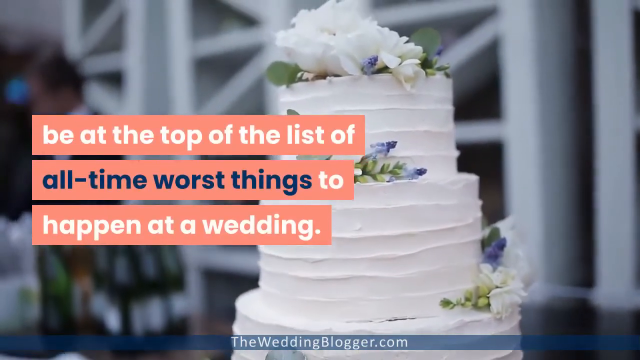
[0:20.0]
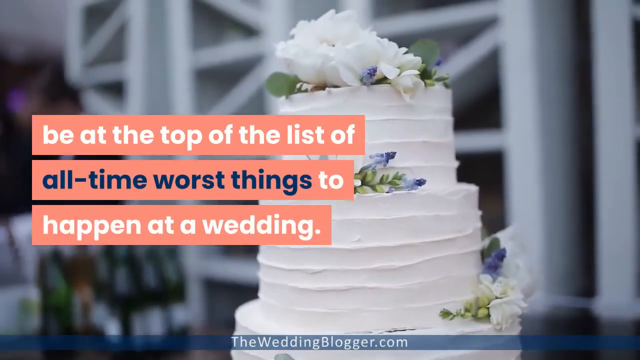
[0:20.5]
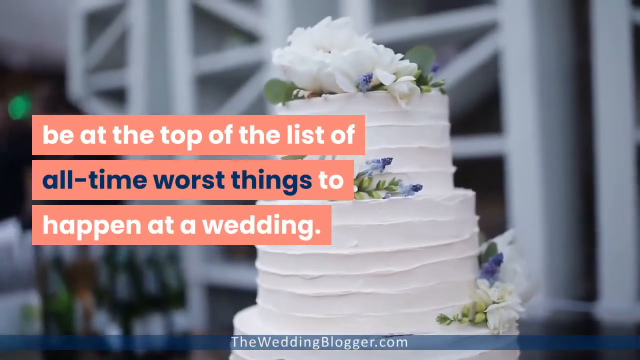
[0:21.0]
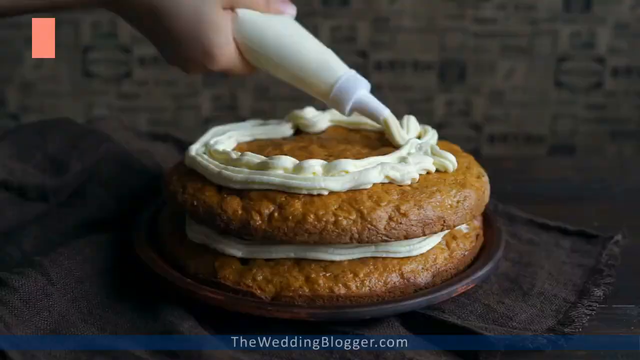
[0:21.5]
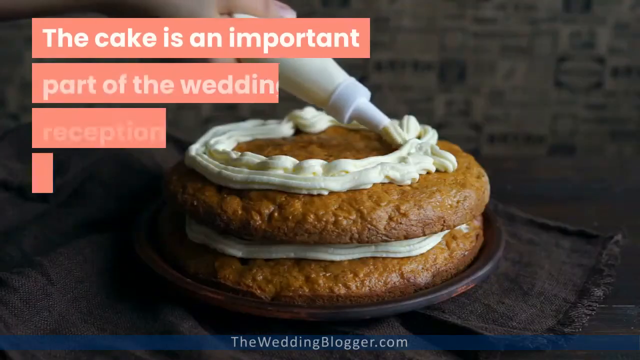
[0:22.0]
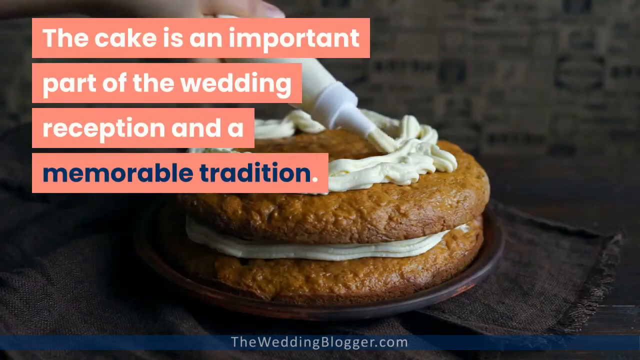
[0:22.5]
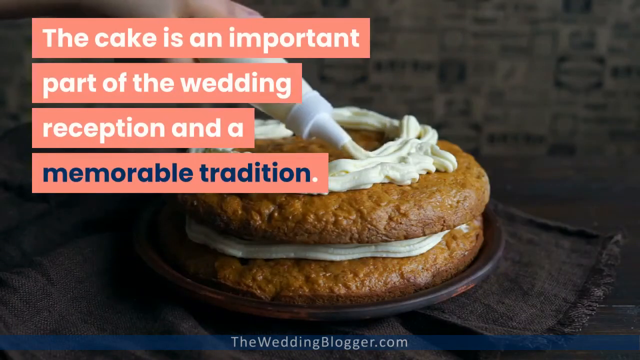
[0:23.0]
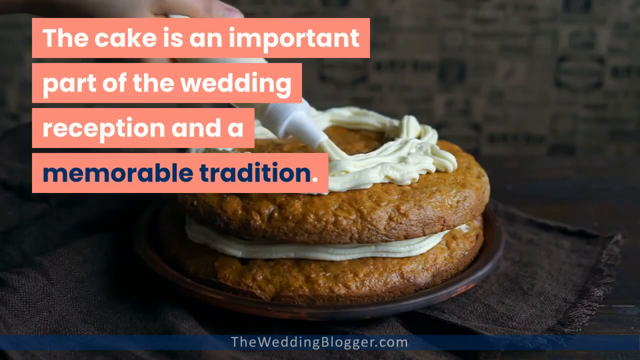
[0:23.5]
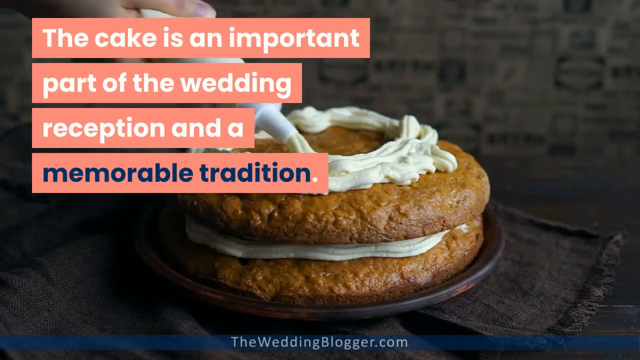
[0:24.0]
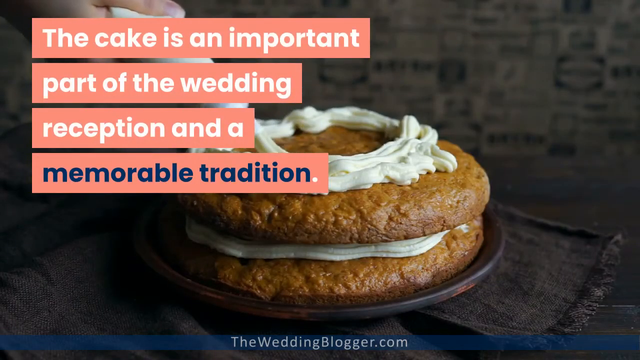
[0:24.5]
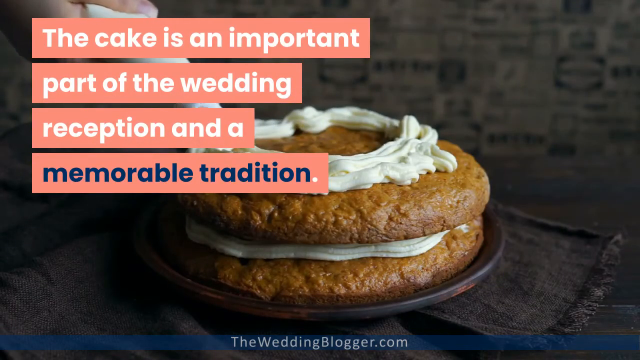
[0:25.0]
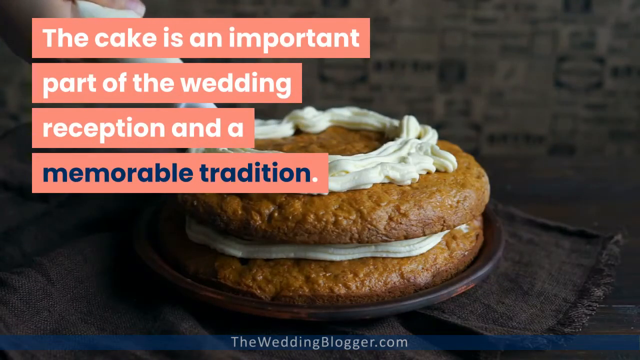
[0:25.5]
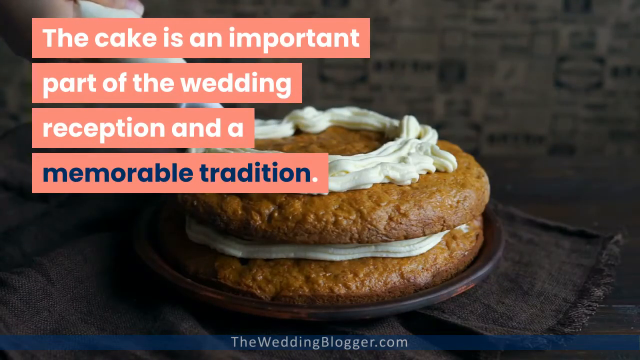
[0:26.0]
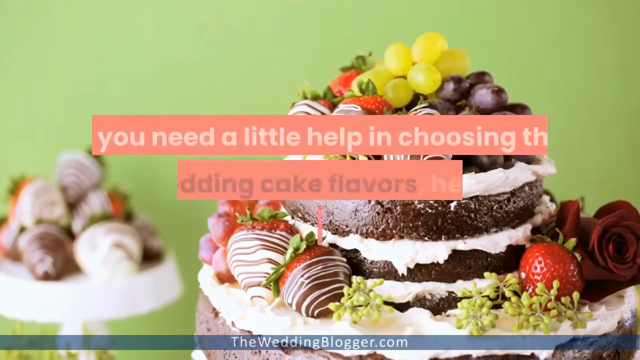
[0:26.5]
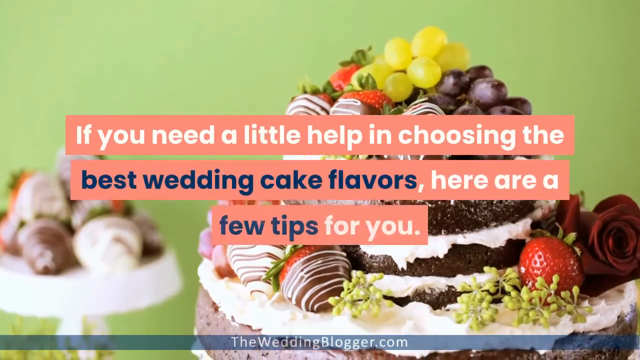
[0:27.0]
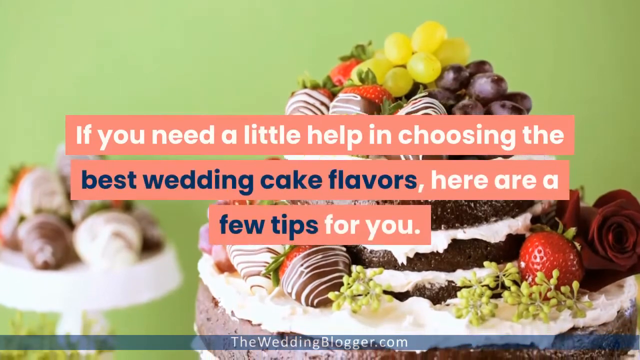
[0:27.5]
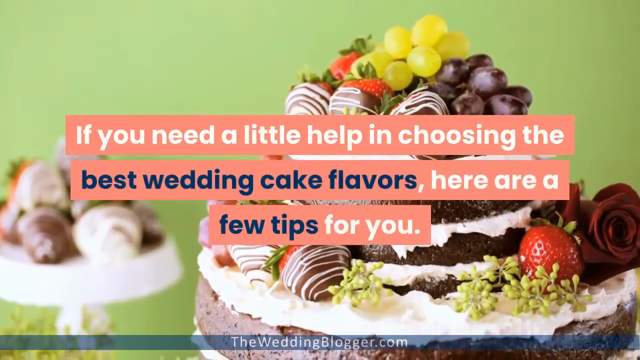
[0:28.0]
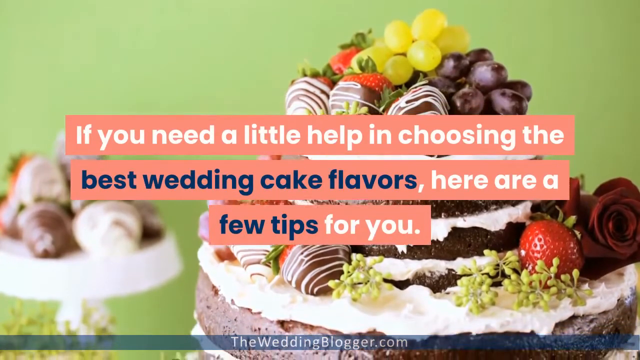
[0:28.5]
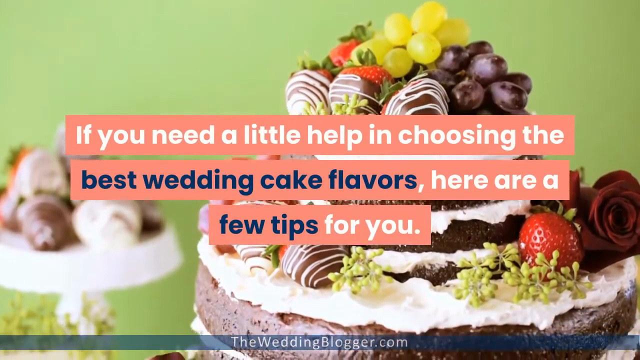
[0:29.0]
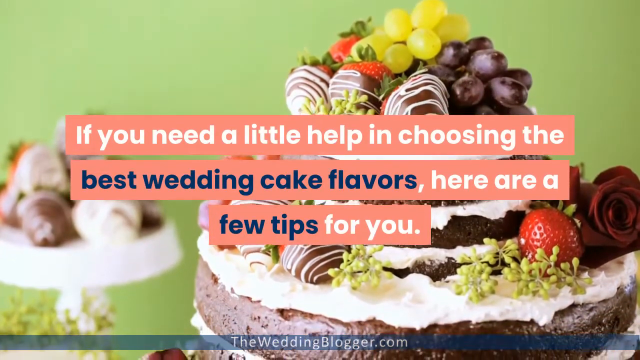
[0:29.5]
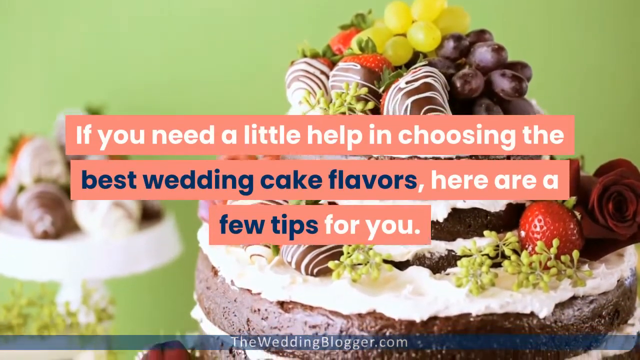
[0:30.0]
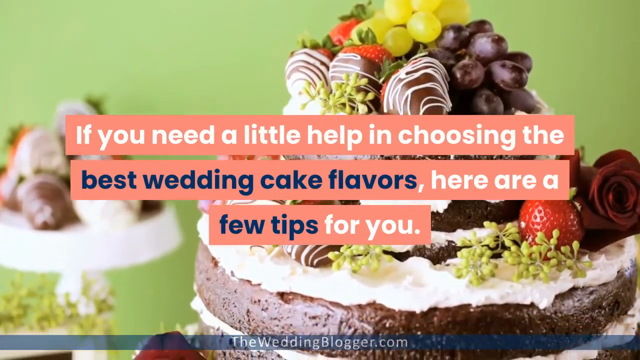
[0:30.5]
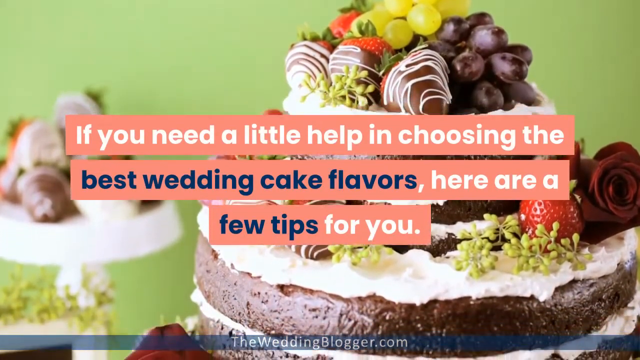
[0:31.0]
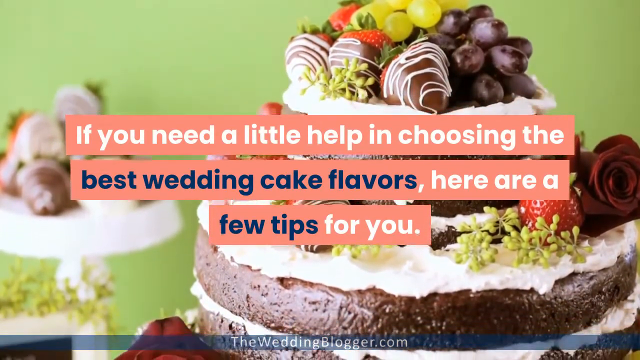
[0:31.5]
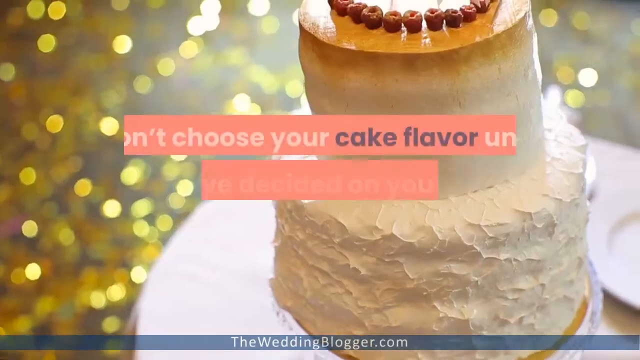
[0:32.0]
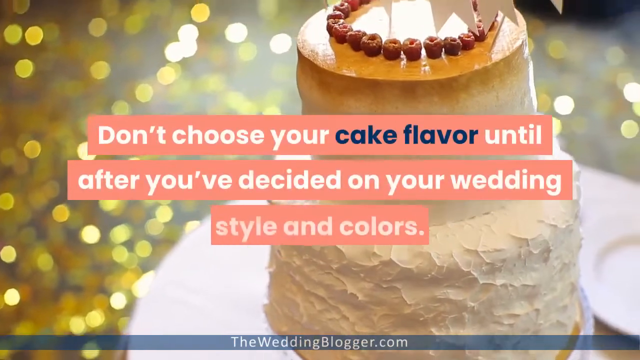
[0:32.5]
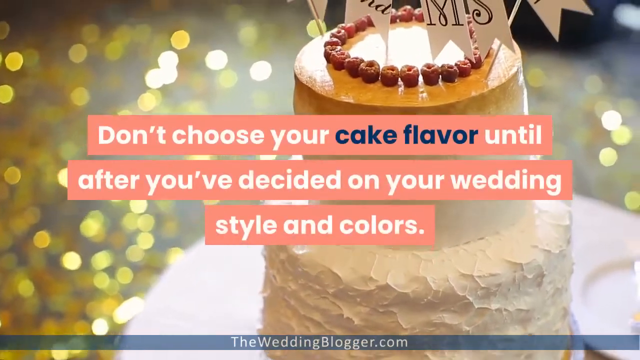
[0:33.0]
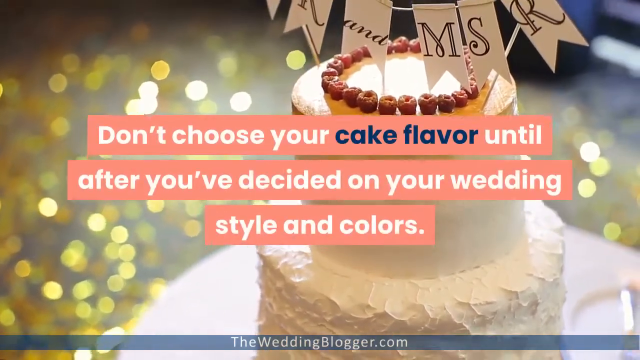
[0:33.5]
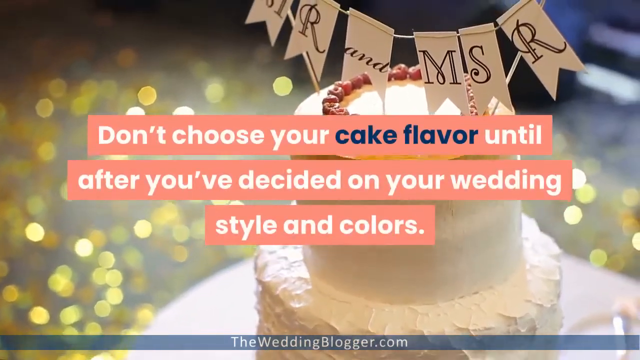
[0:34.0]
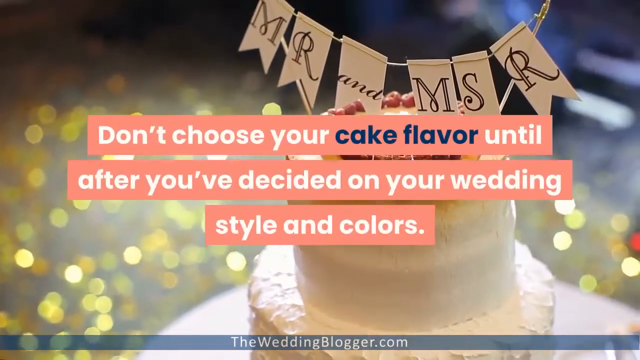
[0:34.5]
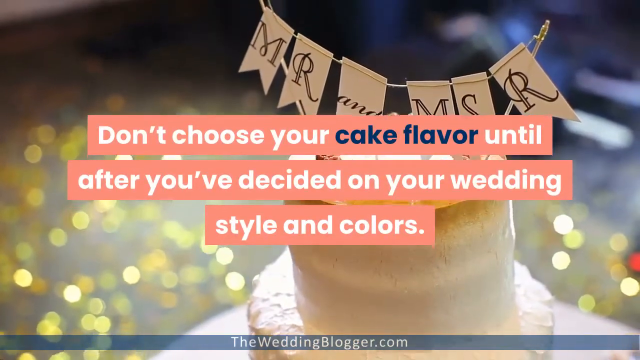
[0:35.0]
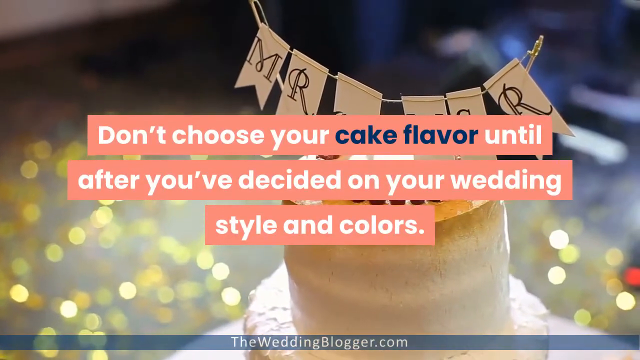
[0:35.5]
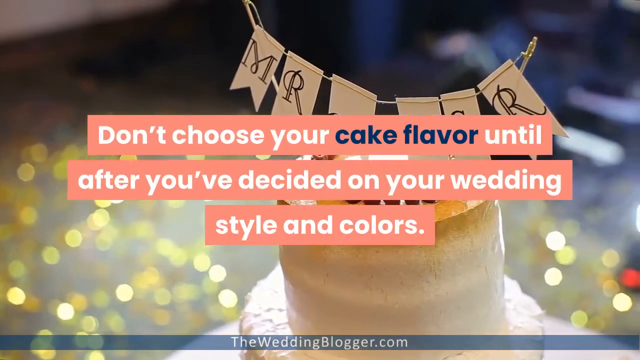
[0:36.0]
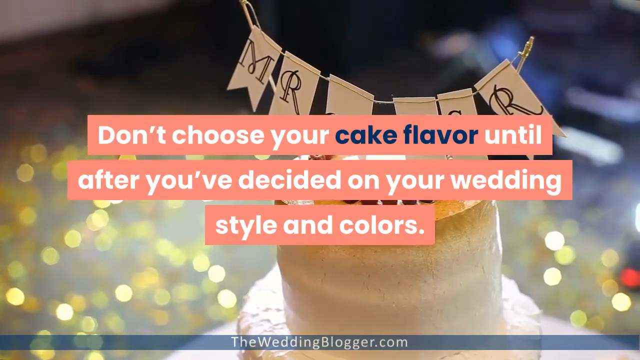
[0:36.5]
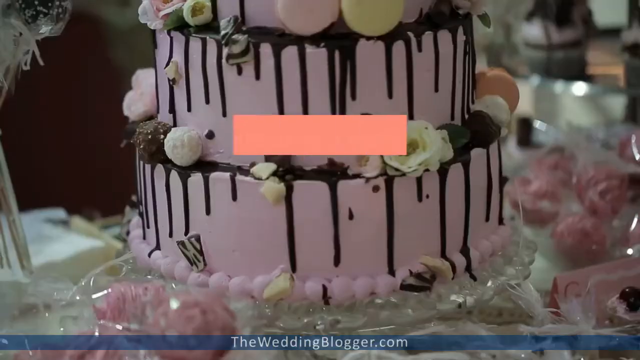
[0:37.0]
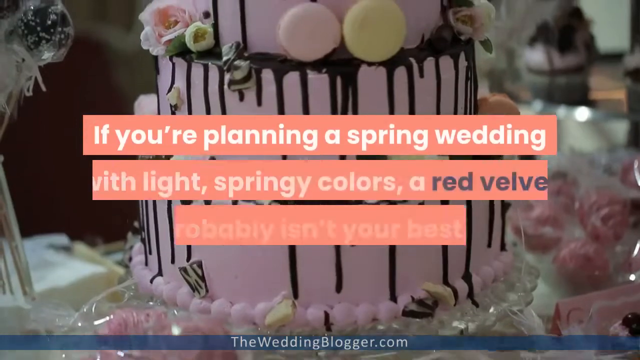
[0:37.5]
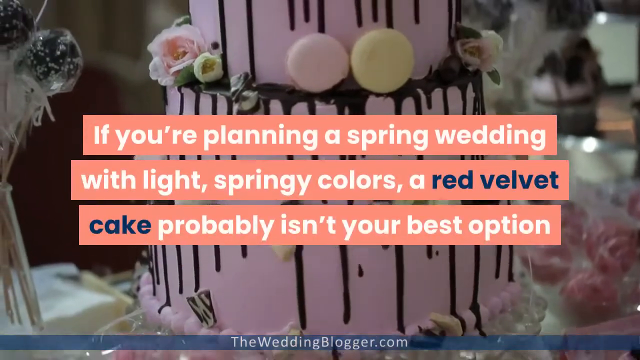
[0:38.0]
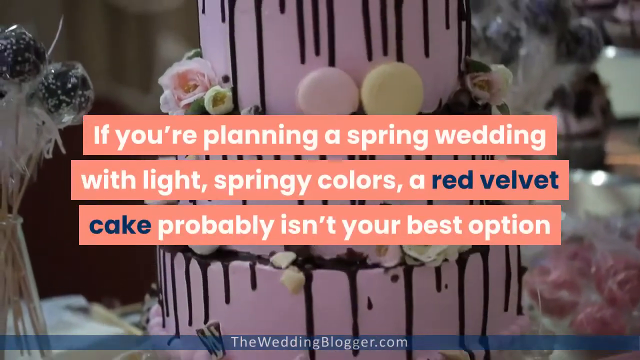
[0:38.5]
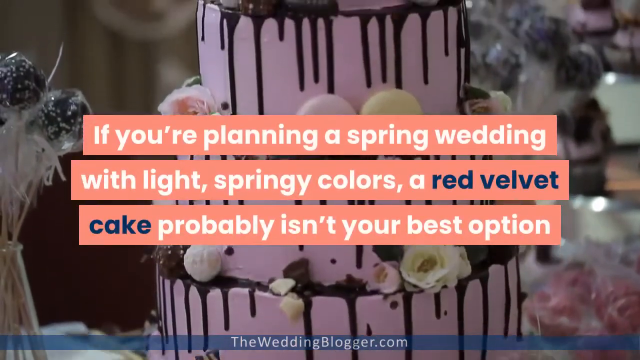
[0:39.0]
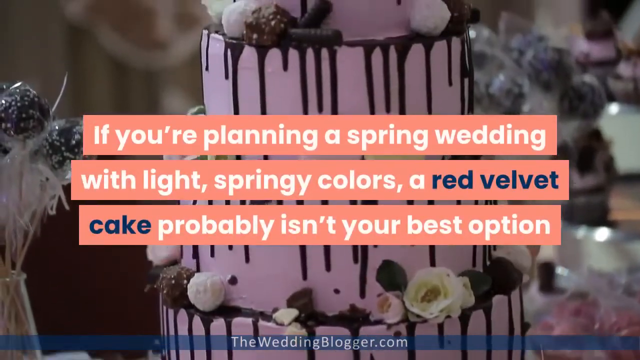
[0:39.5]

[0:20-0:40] The on-screen text ends with "be at the top of the list of all time worst things to happen at a wedding." A white wedding cake with several tiers is shown, with a ridge pattern going around it. The video cuts to white icing being put onto different layers of a cake, with text reading "The cake is an important part of the wedding reception and a memorable tradition." The person continues icing it. Text then reads "If you need a little help in choosing the best wedding cake flavors here are a few tips for you," while in the background there is a cake covered with chocolate-covered strawberries and grapes; the camera pans down slowly on that cake. Next comes the text "Don't choose your cake flavor until after you've decided on your wedding style and colors," with a wedding cake that has raspberries on top. Another white cake with chocolate drippings is shown, and the text reads "If you're planning a spring wedding with light springy colors, a red velvet cake probably isn't your best option."